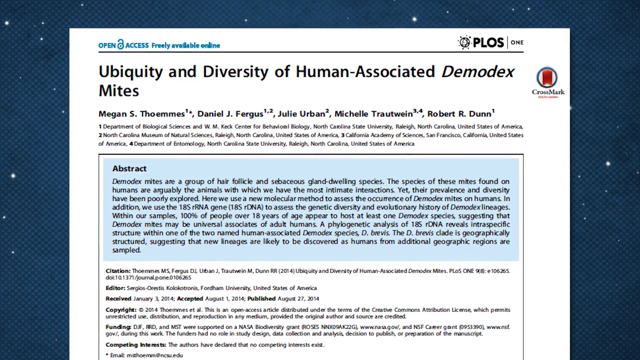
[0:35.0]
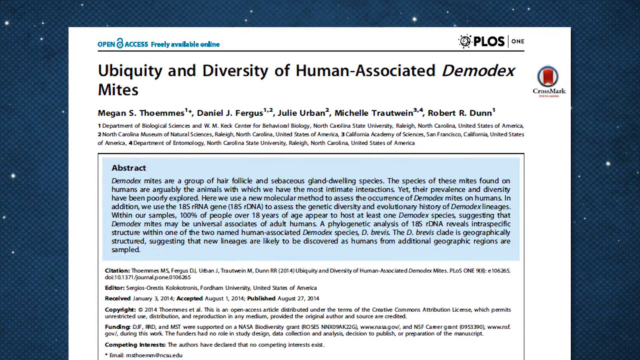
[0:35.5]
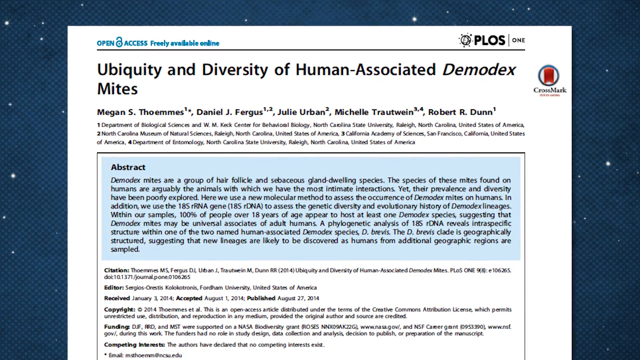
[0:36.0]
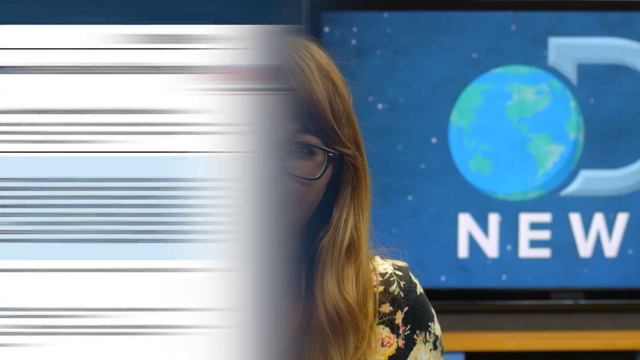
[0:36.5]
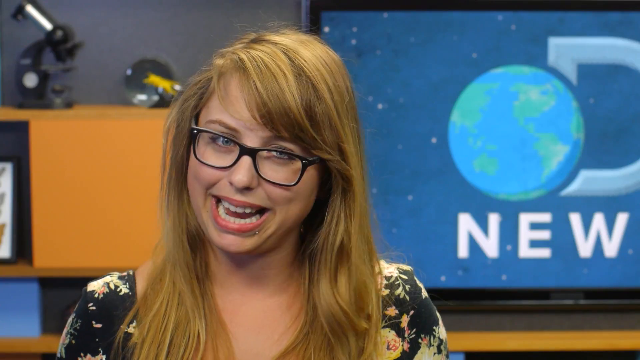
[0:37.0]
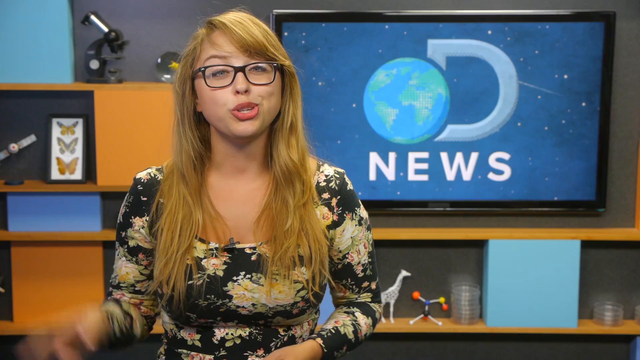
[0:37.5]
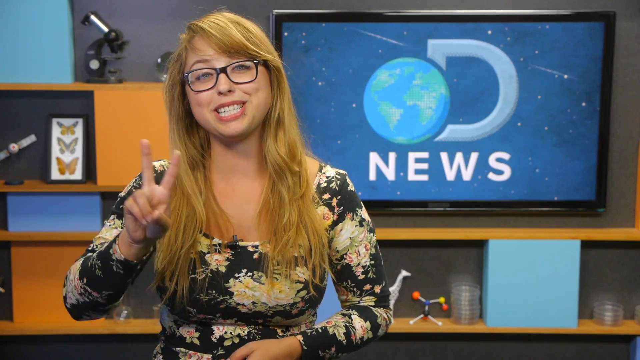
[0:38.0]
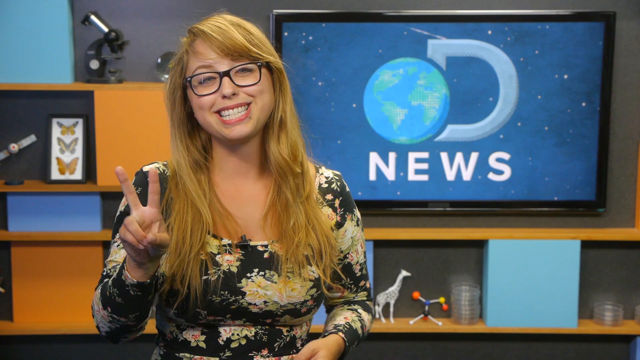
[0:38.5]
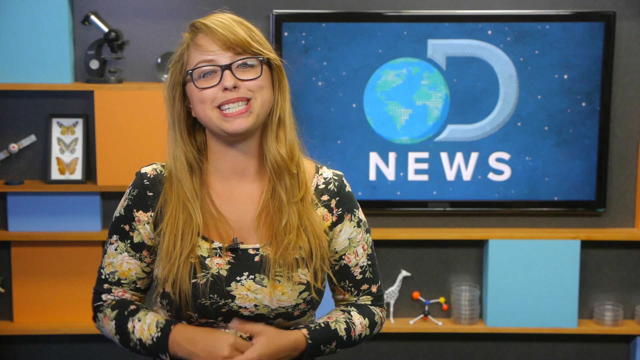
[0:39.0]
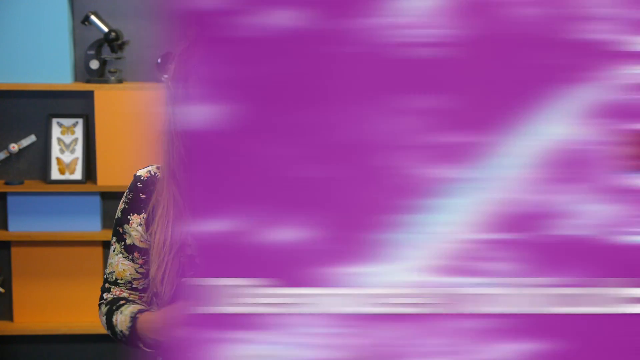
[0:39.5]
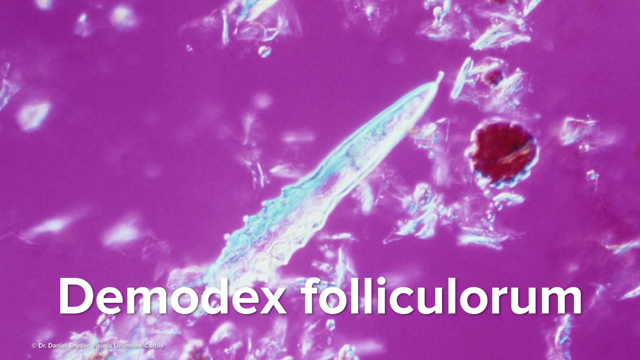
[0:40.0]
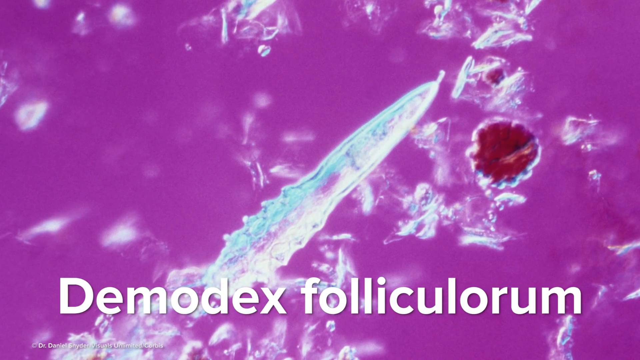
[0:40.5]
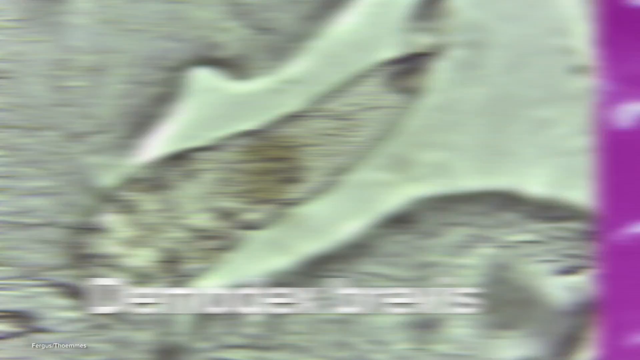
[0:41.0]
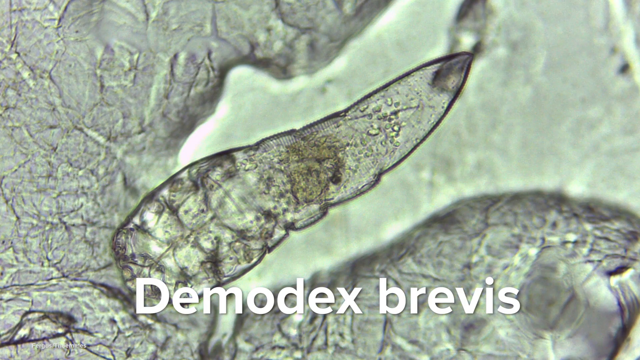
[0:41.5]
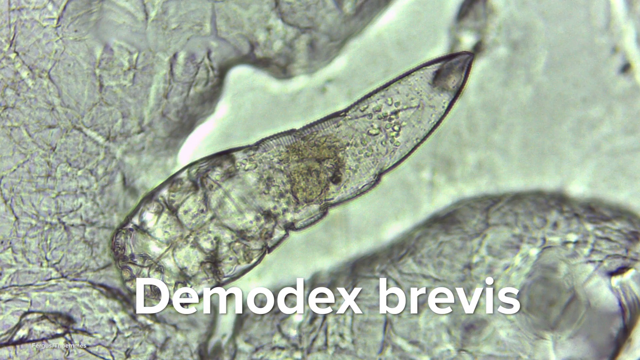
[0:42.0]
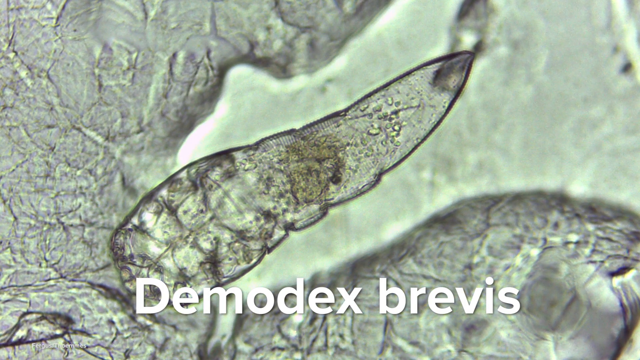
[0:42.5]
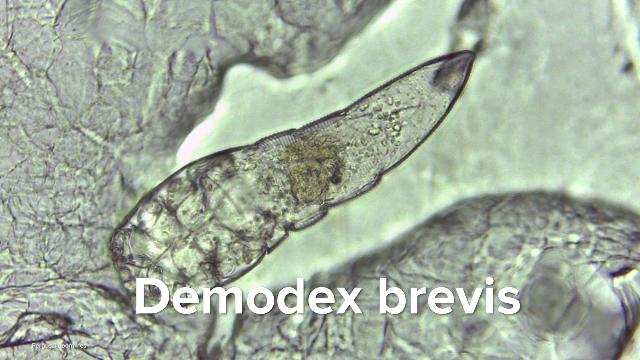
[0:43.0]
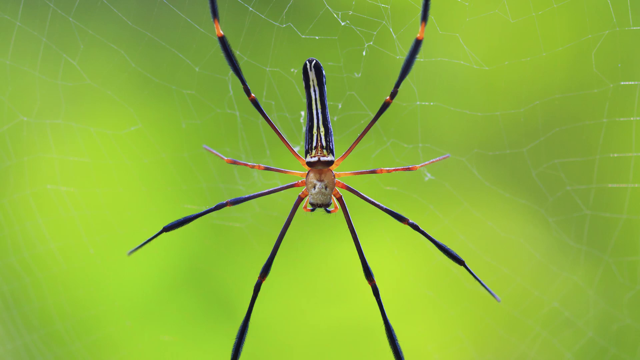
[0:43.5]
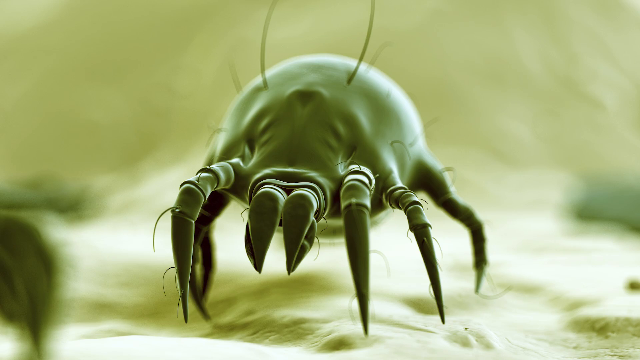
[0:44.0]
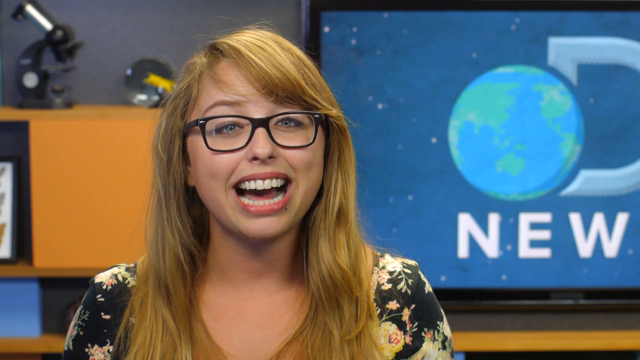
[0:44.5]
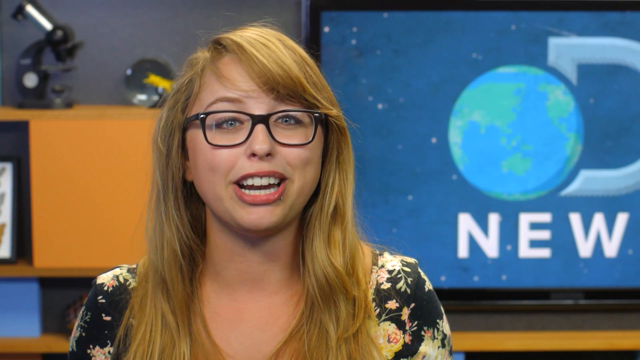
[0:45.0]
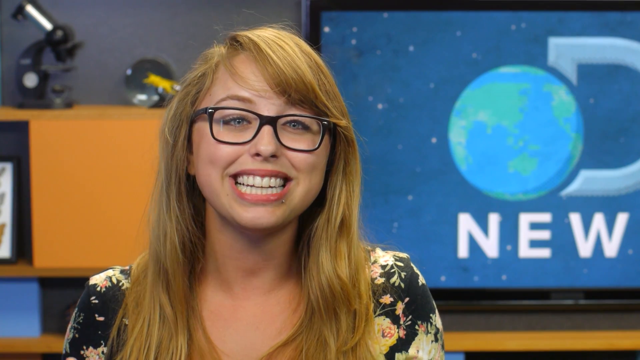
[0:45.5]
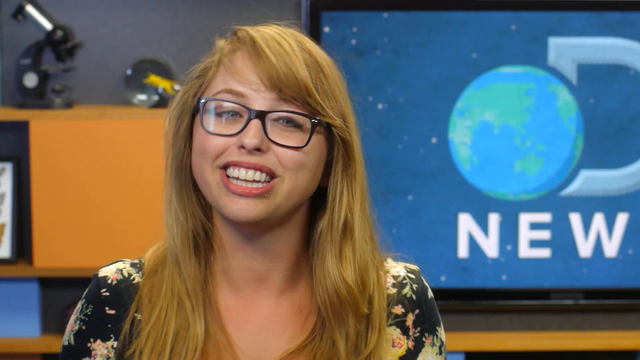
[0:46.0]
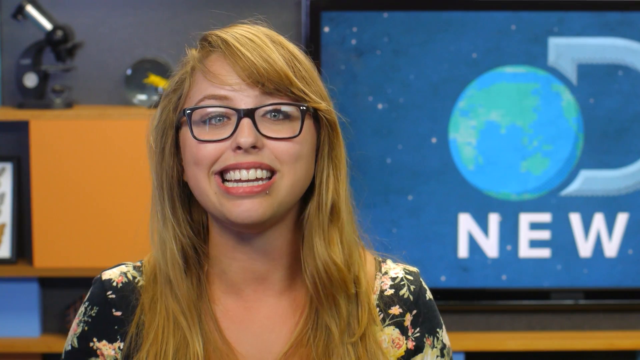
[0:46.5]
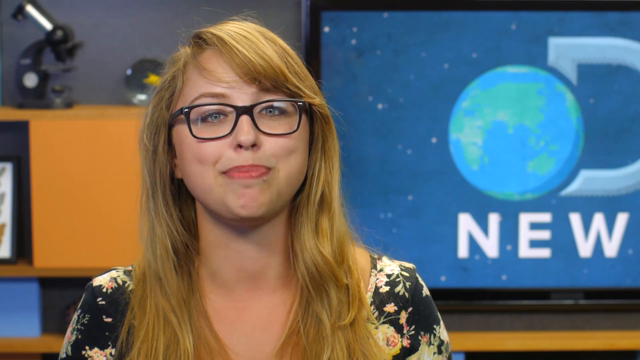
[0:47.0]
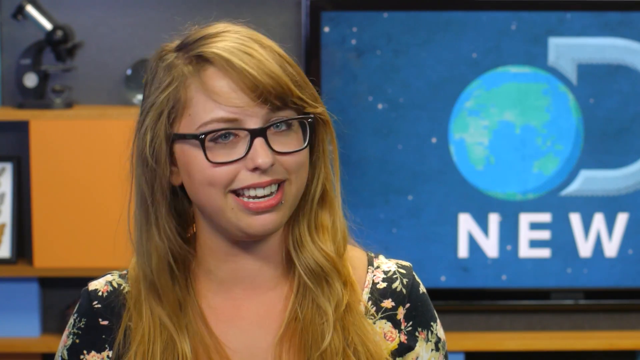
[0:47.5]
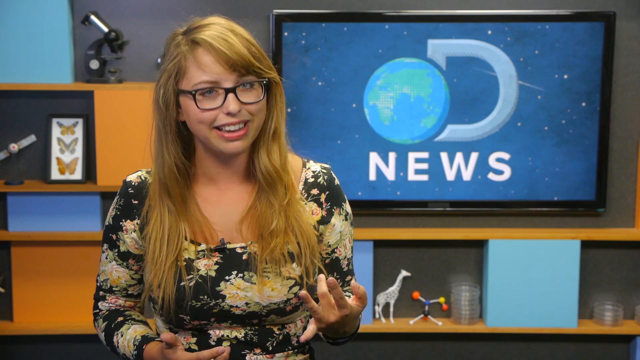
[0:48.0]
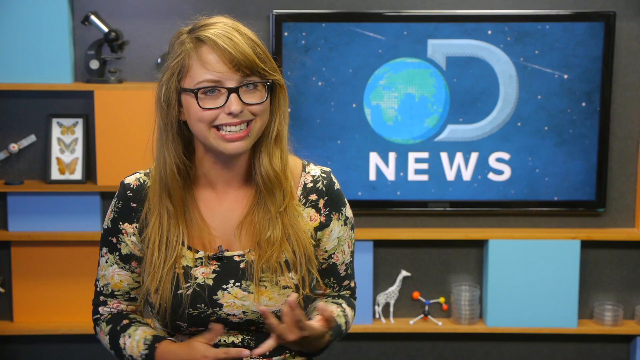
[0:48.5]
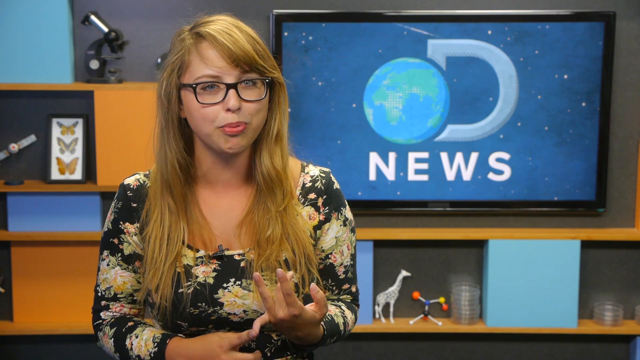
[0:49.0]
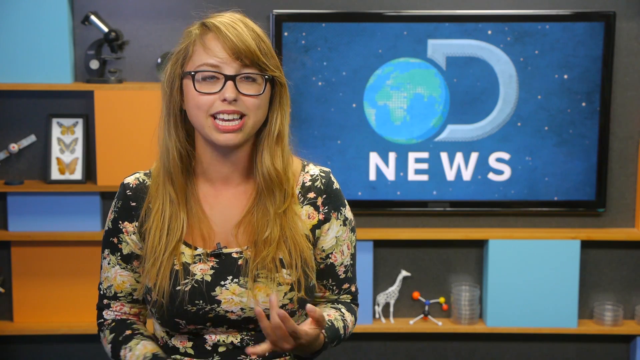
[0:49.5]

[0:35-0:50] The newscaster, Laci Green, smiles a lot, with matter-of-fact and isn't-this-interesting smiles and matching hand gestures, animated but not over the top. She flashes a peace sign with her right hand. Then there is a segment with a close-up through a microscope lens of something from a dish underneath the microscope. Next come mites, which seem to be just images of mites rather than something under the microscope. Then an orange and black spider, fairly large, is shown with a web outside. A sheet of paper with a lot of text on it follows, possibly news or information about what was under the microscope, the mites or the spider. The newscaster is in what appears to be a home studio of sorts, not professional but not cheap. Behind her are the TV screen, the shelving, which is probably tan rather than brown, and a microscope on top of some of the shelving.